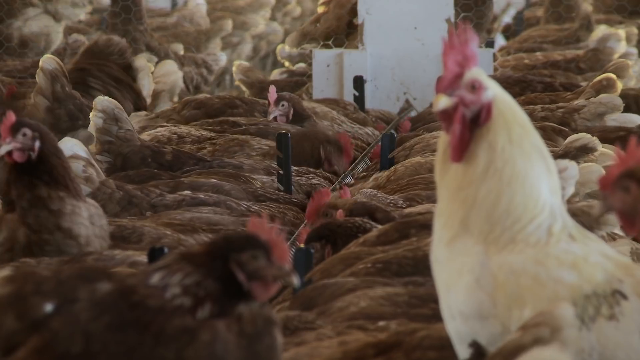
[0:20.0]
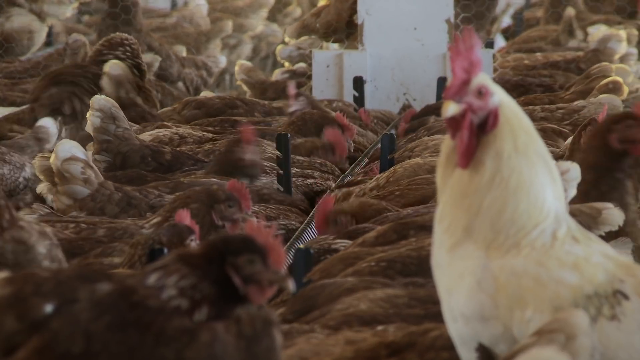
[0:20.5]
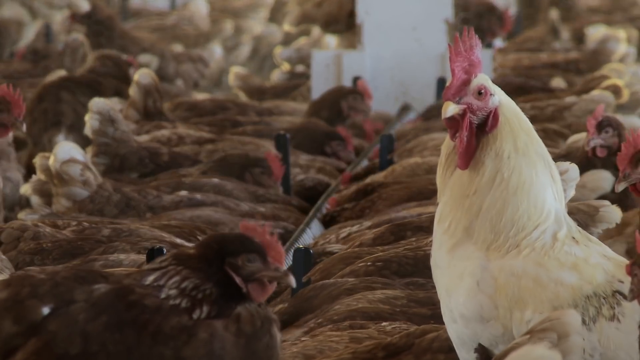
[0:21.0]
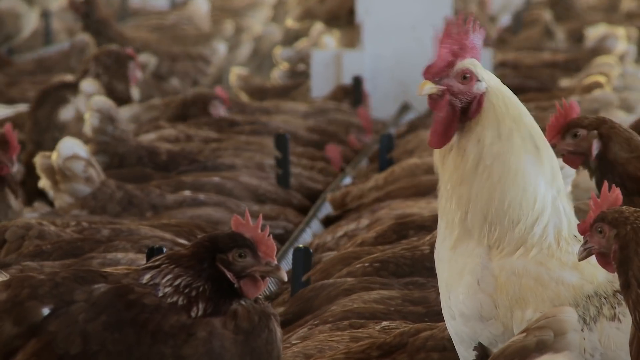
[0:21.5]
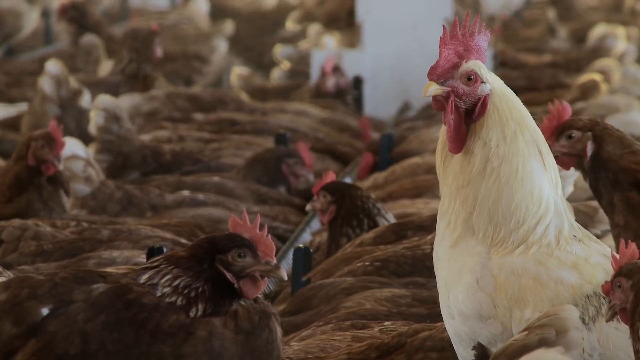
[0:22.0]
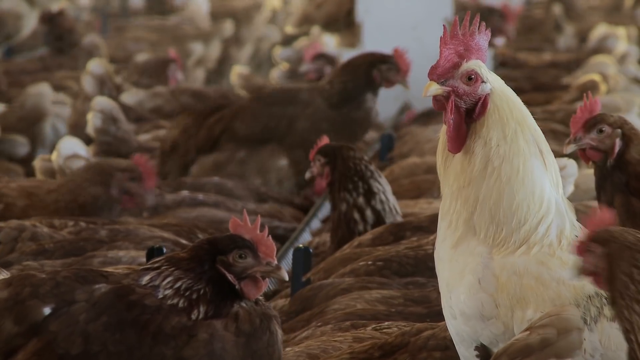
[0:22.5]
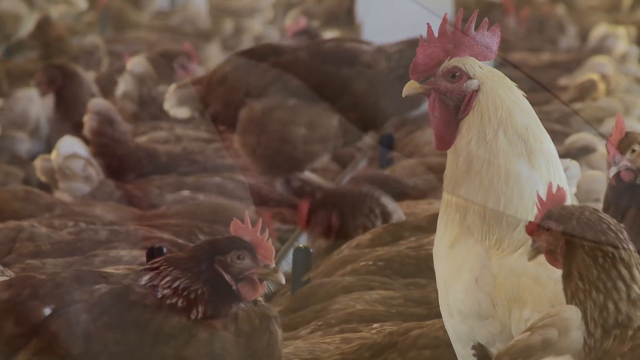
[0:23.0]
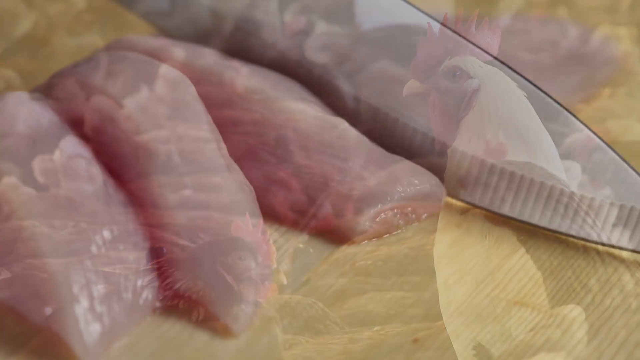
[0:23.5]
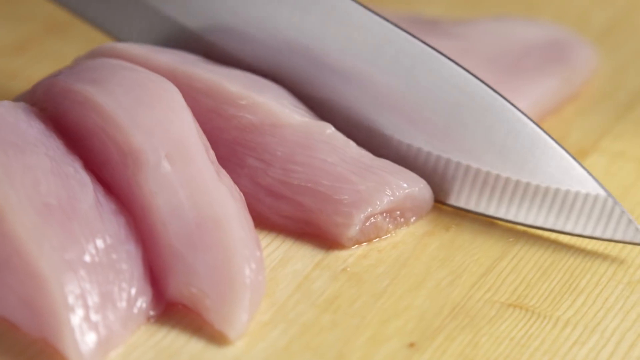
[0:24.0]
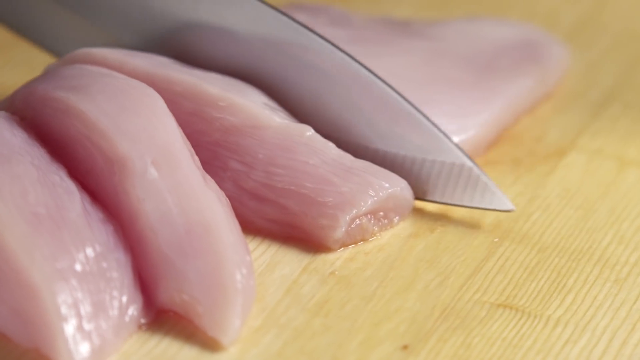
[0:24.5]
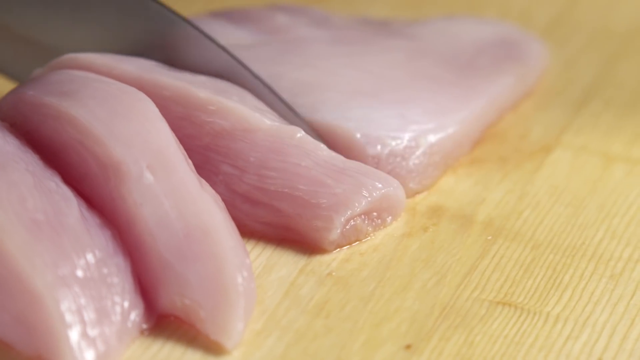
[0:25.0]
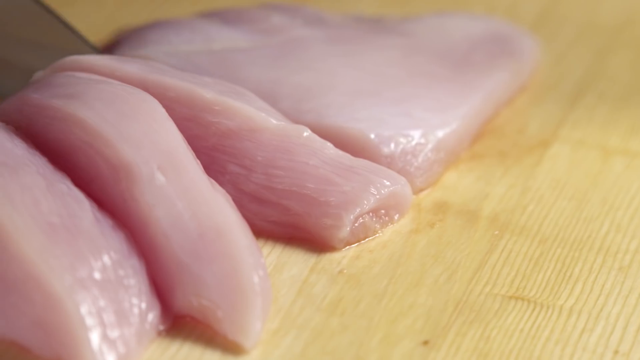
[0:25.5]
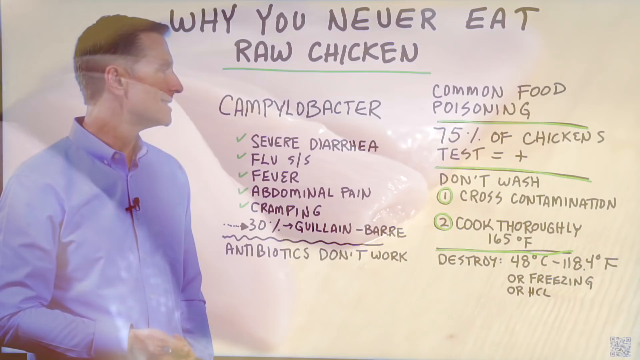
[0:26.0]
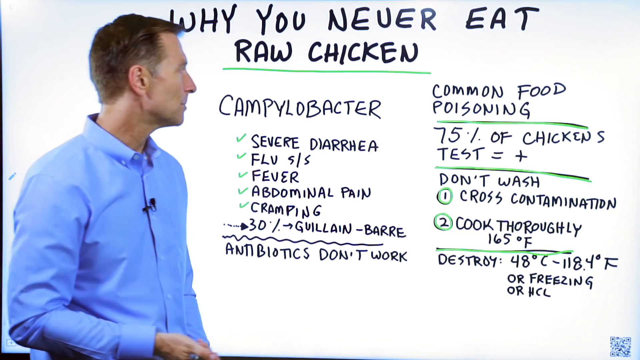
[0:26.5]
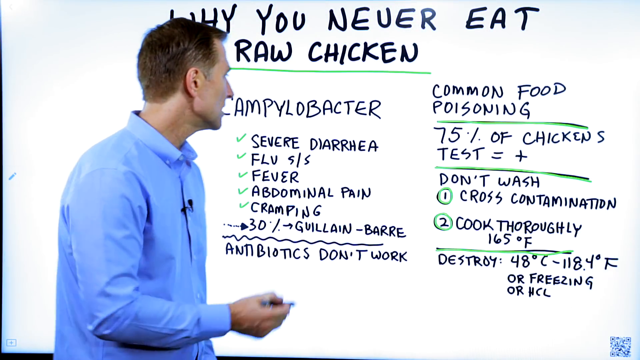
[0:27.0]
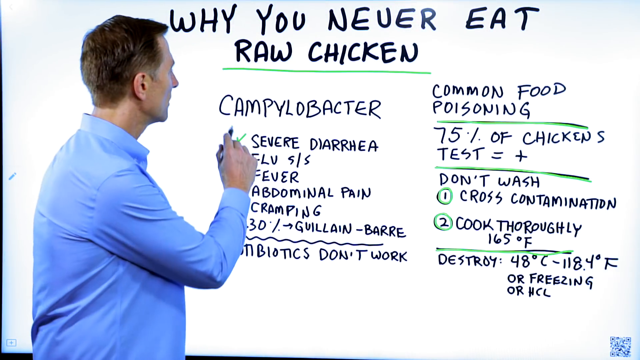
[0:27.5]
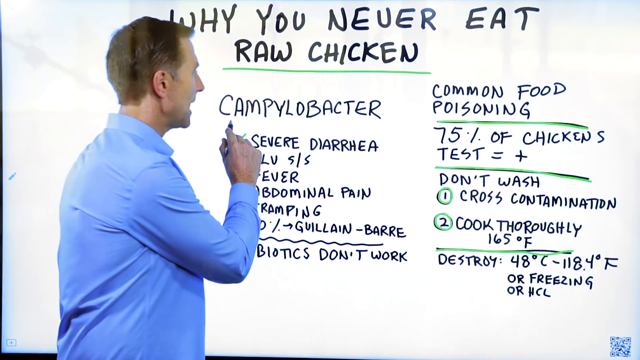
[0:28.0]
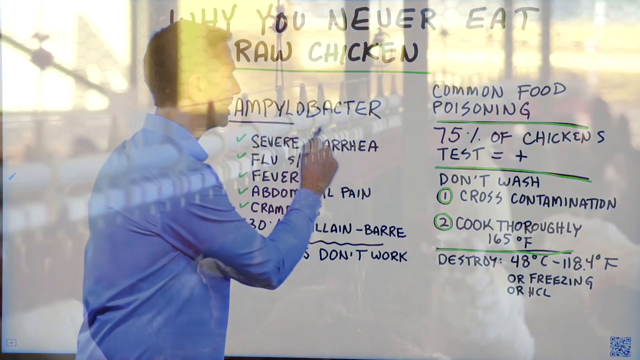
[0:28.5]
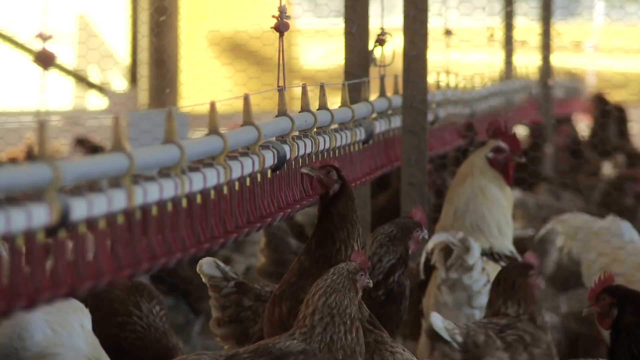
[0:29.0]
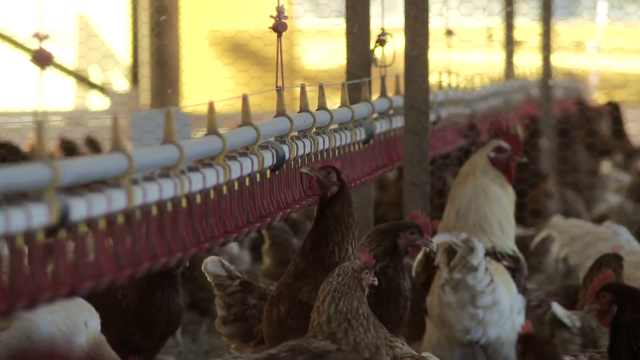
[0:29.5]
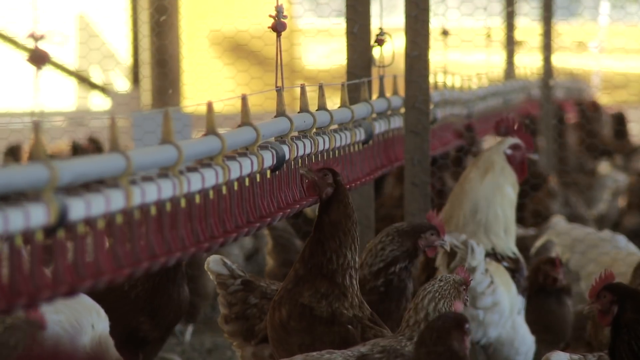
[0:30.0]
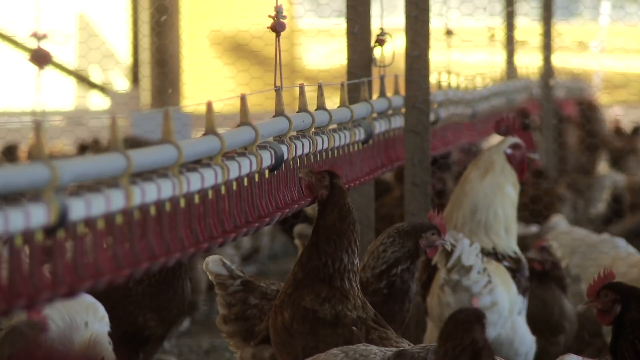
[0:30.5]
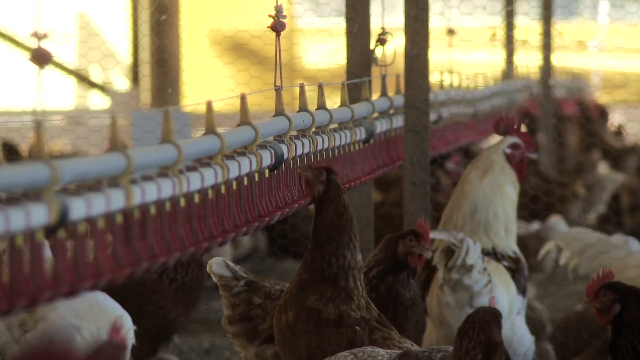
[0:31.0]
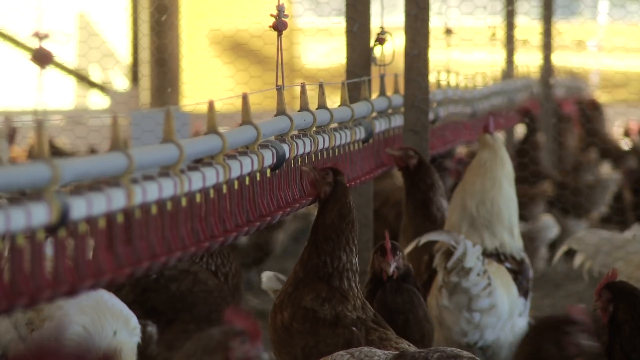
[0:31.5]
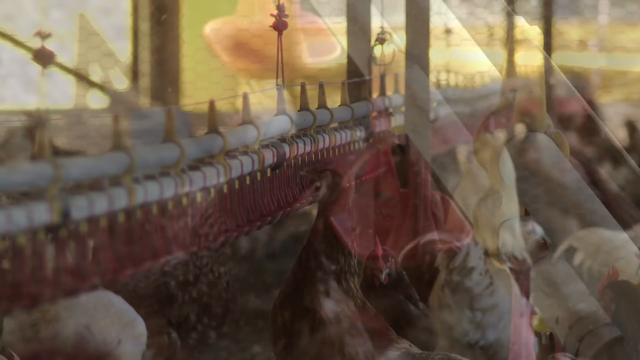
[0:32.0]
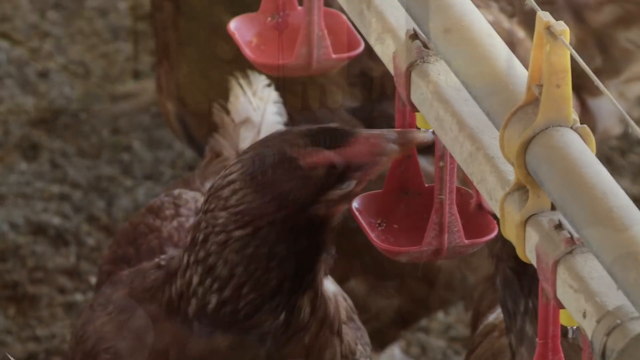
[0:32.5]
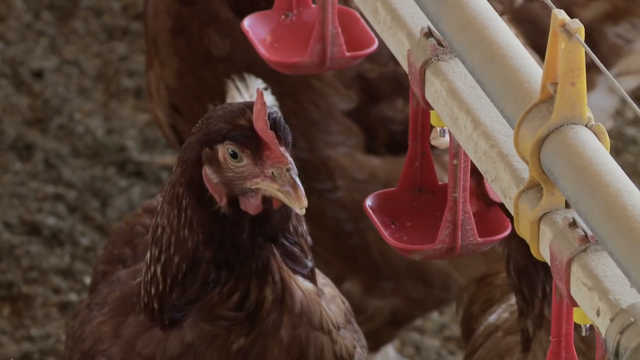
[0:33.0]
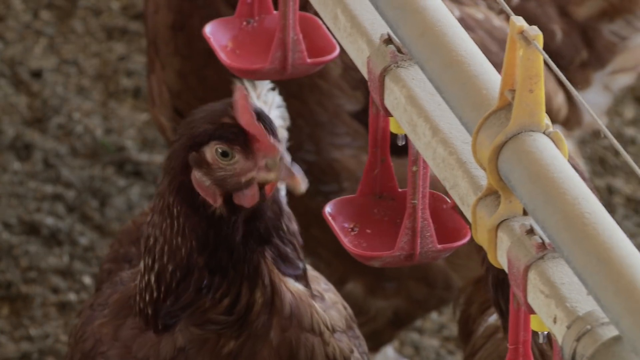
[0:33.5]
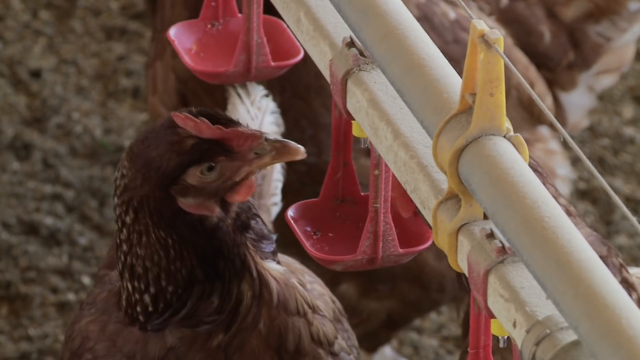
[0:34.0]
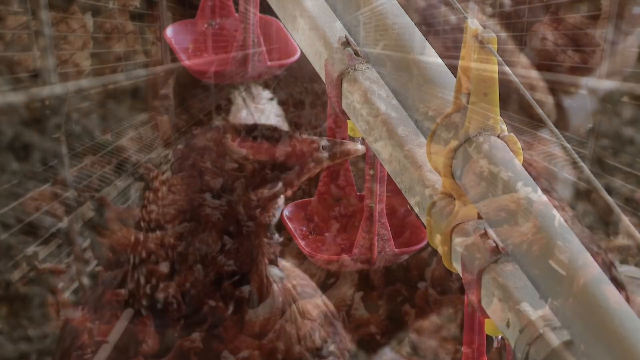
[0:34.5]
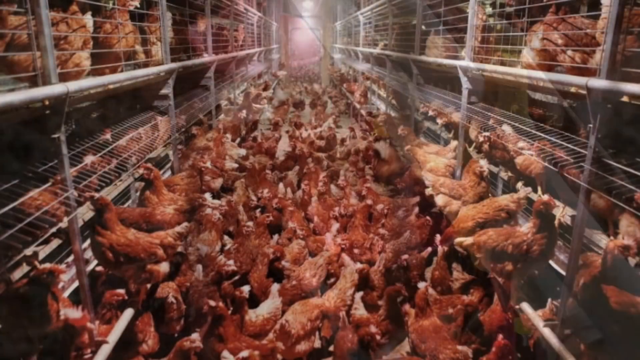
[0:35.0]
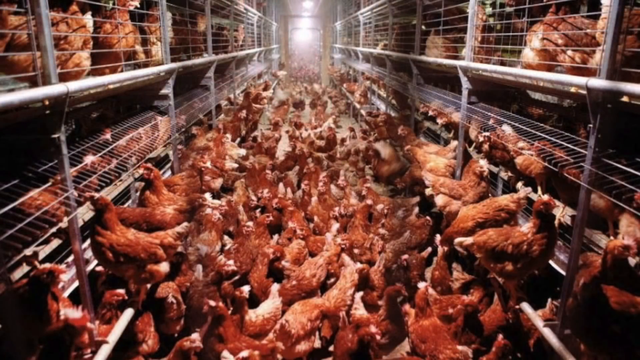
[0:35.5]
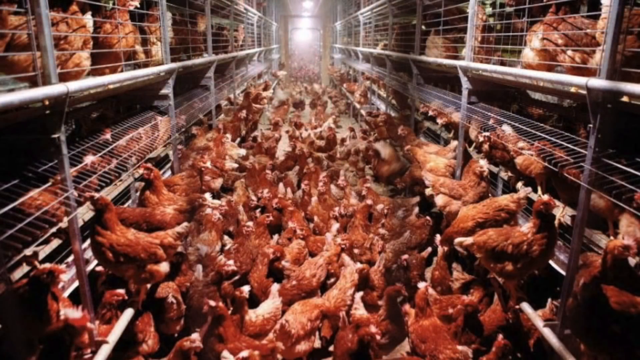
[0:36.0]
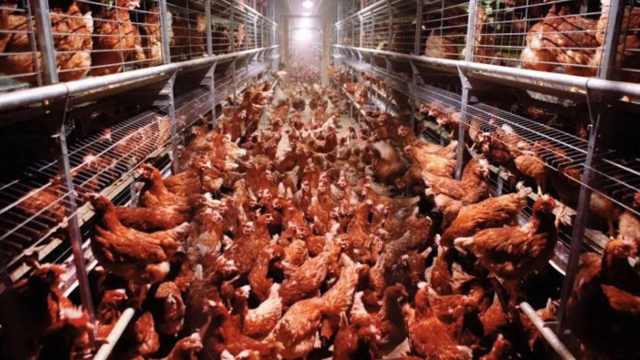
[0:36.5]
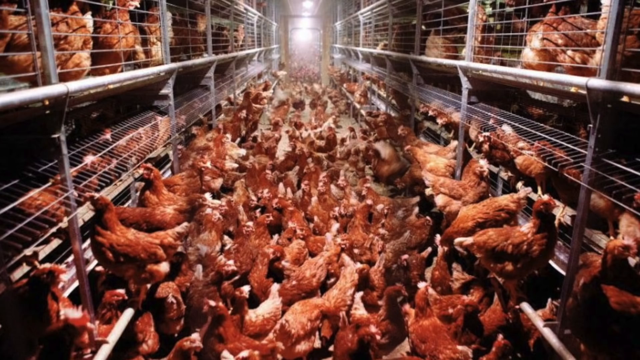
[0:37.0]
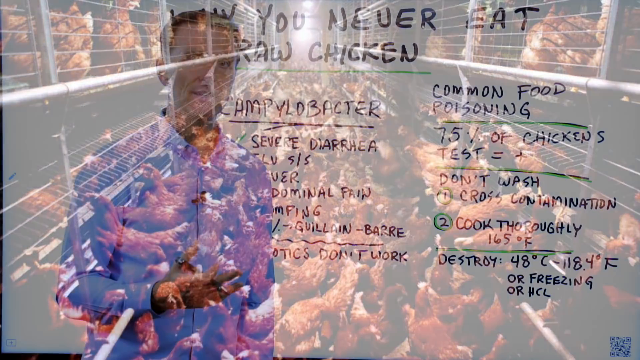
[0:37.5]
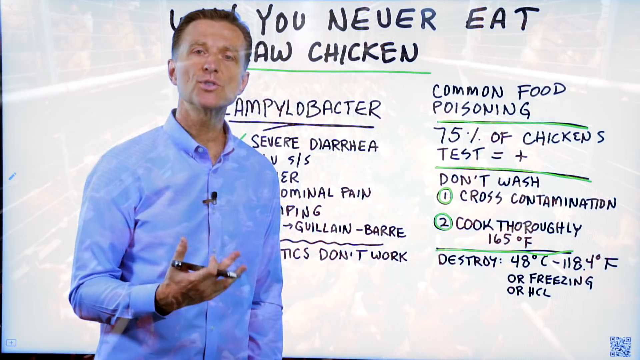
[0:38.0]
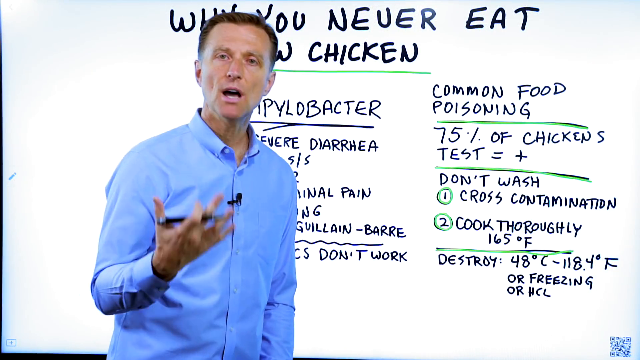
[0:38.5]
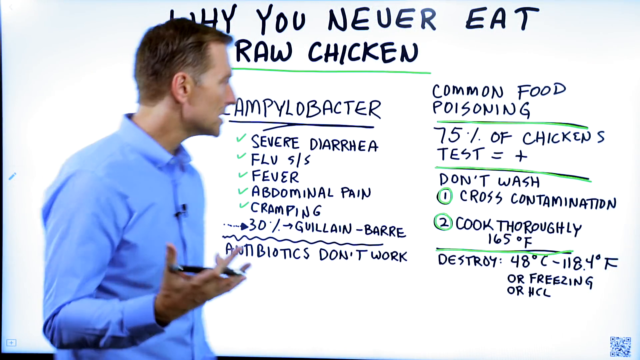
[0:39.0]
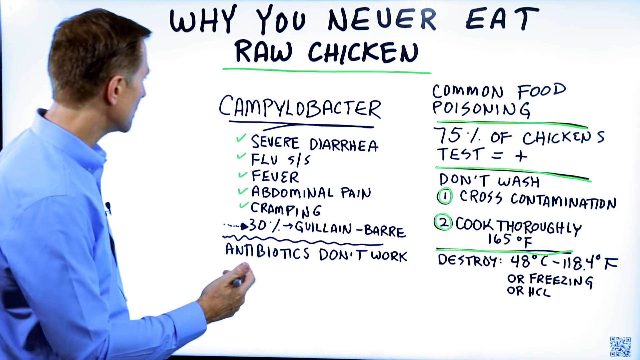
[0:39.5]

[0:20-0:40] Chickens are moving around. There are brown chickens and one light brown one, which looks like a male chicken, while the female ones are dark in color. Next, chicken breast and a knife are shown on a table, and someone appears to be cutting the breast meat. The man teaching about why you never eat raw chicken is shown at his whiteboard. The chickens are shown eating some food; each chicken seems to have its own house where it eats, and they drink water from their own bowls. Most of the chickens are under tables, while some stay above the table. A picture of a chicken is then shown.